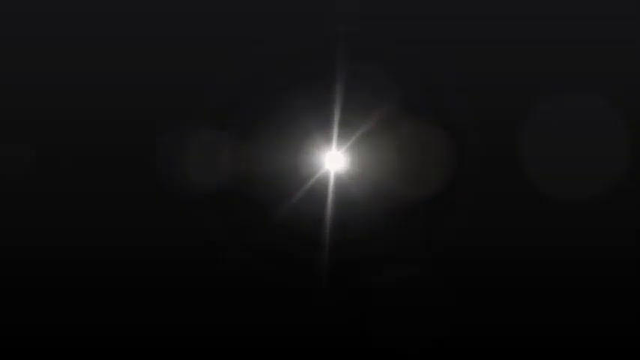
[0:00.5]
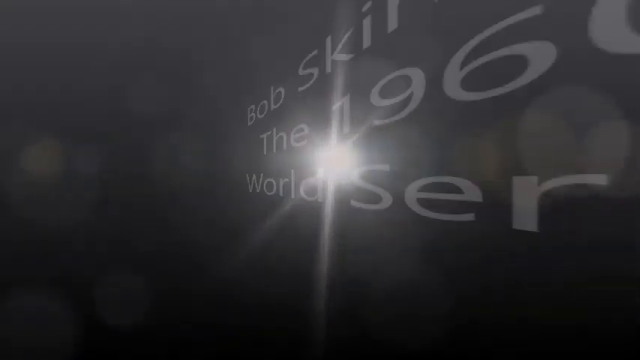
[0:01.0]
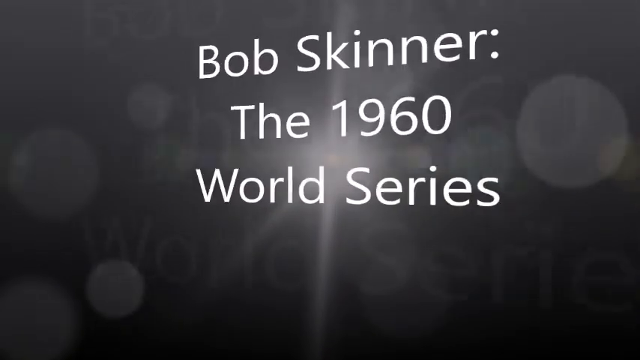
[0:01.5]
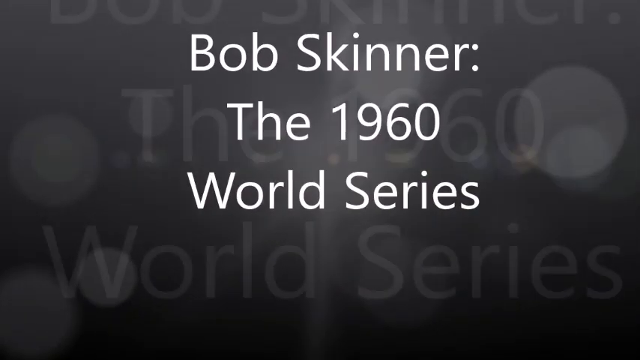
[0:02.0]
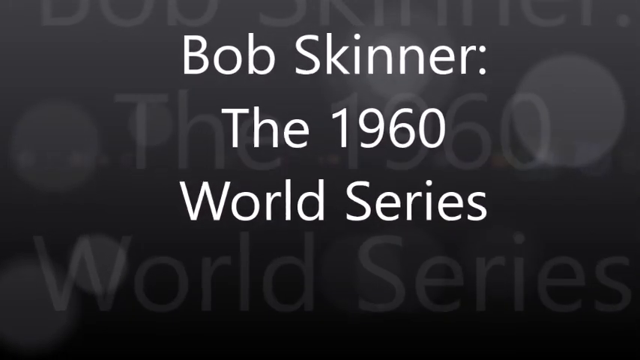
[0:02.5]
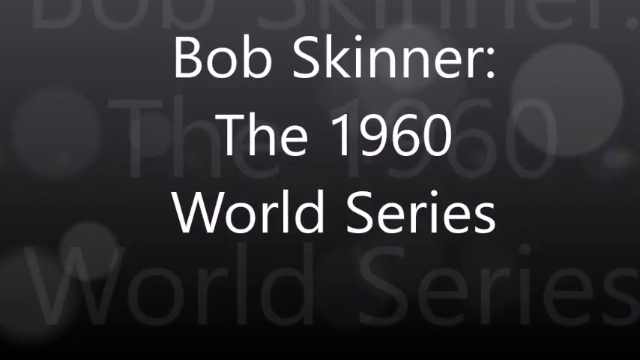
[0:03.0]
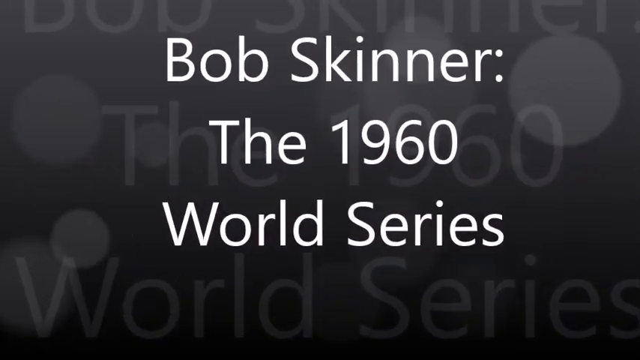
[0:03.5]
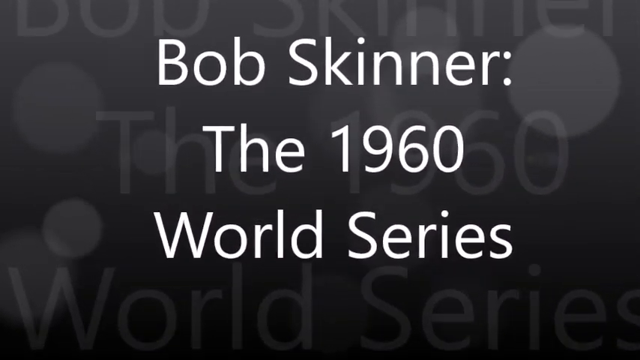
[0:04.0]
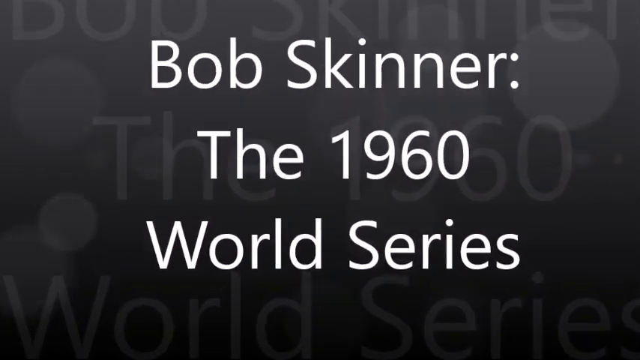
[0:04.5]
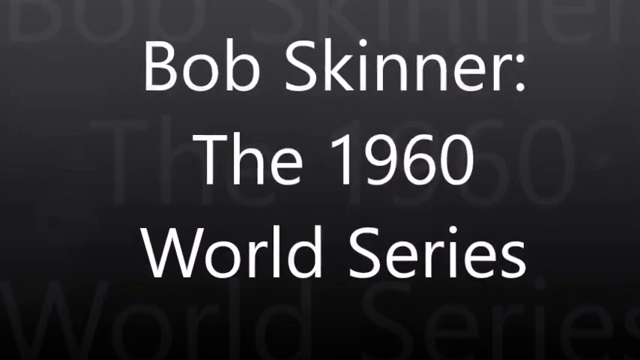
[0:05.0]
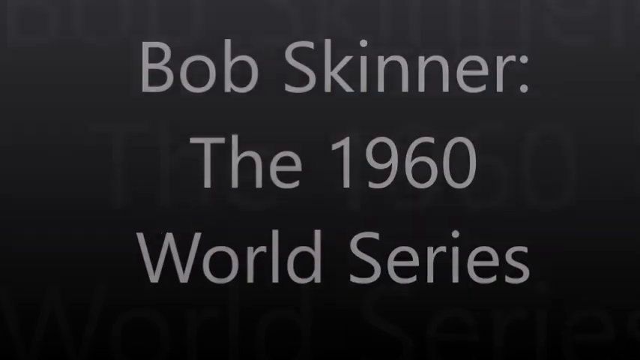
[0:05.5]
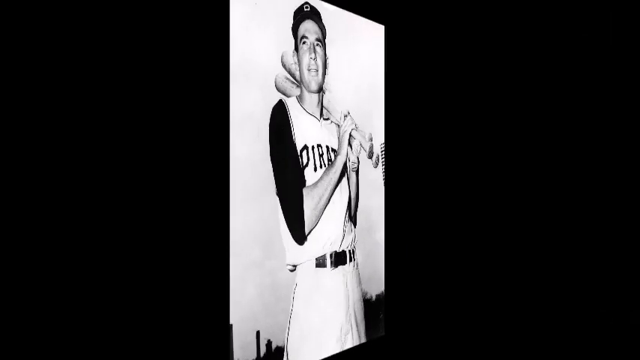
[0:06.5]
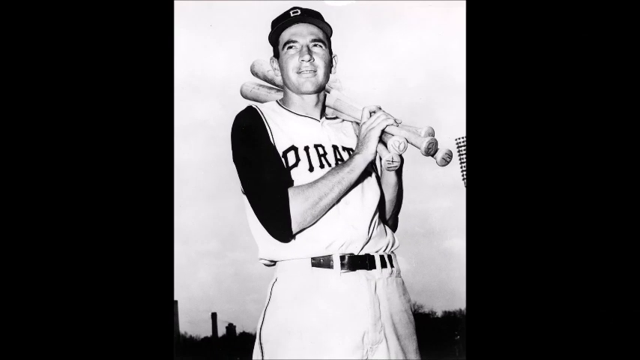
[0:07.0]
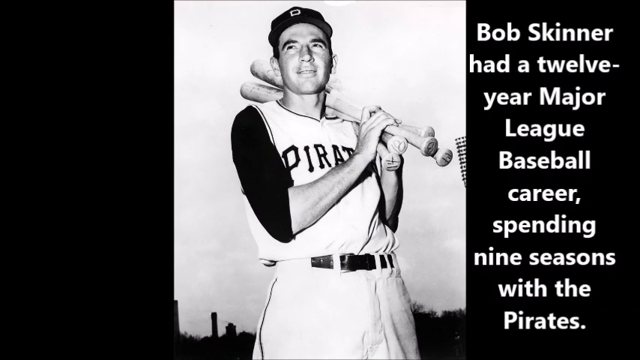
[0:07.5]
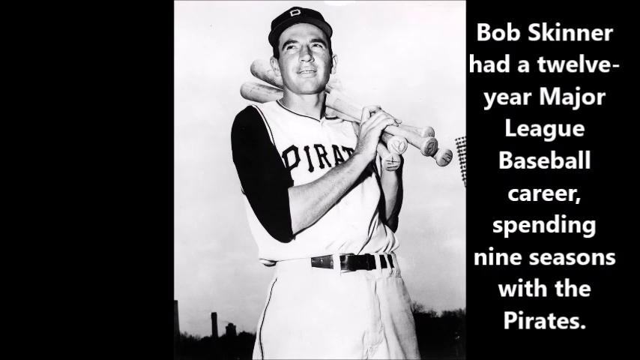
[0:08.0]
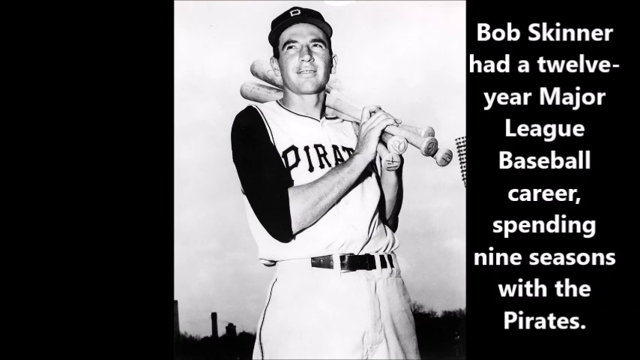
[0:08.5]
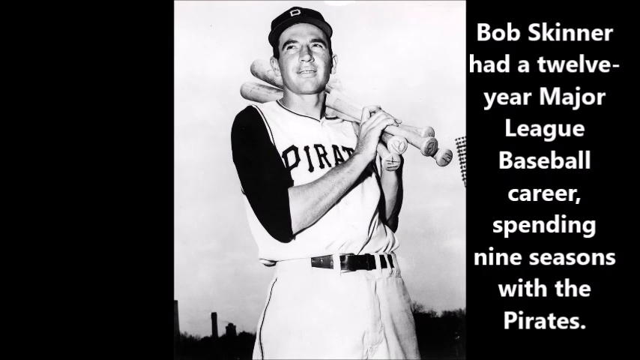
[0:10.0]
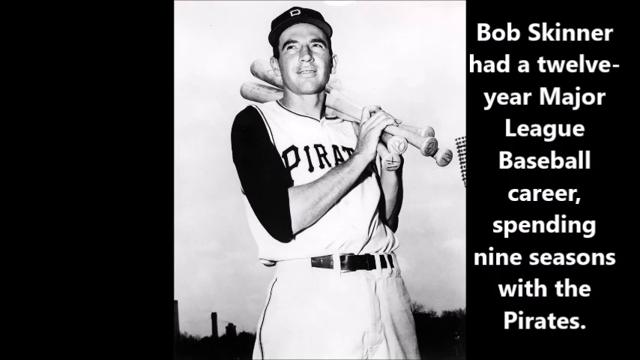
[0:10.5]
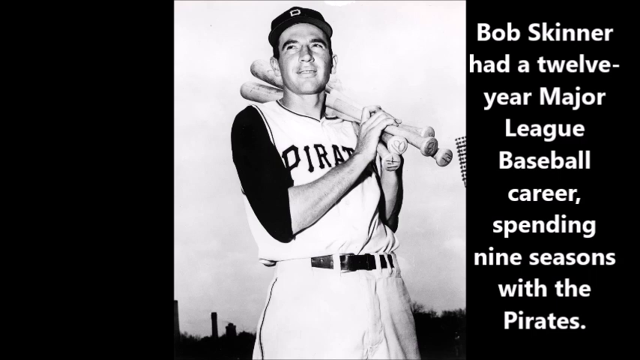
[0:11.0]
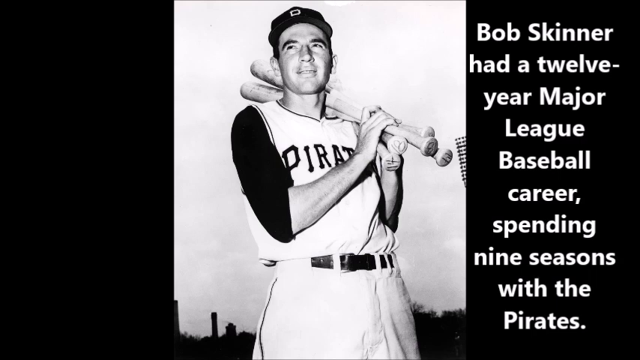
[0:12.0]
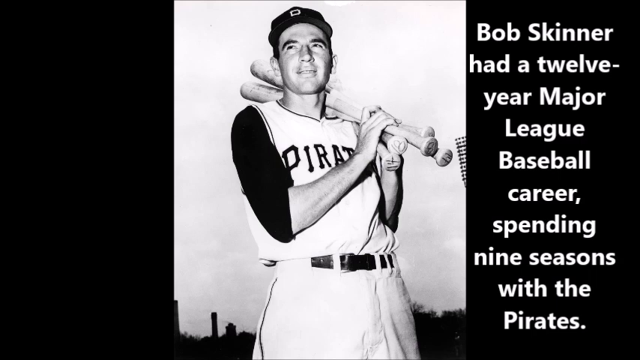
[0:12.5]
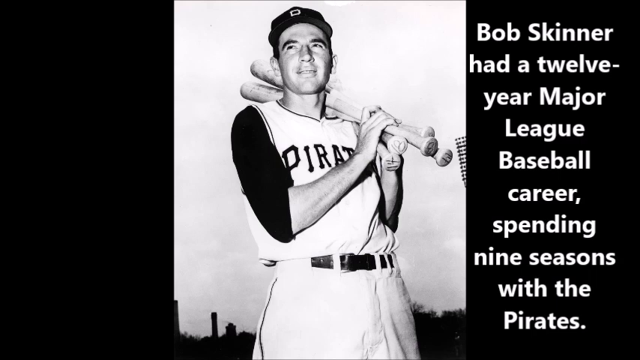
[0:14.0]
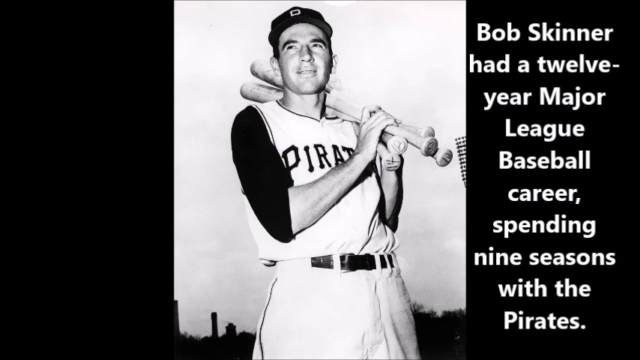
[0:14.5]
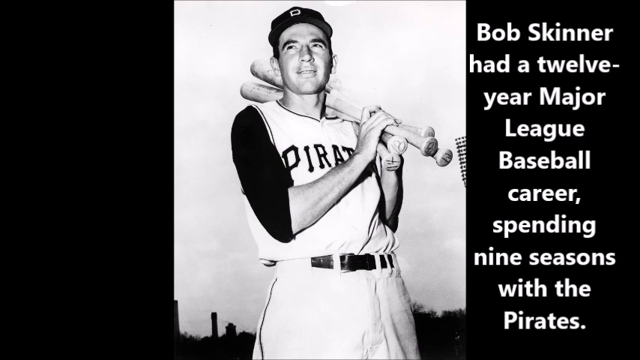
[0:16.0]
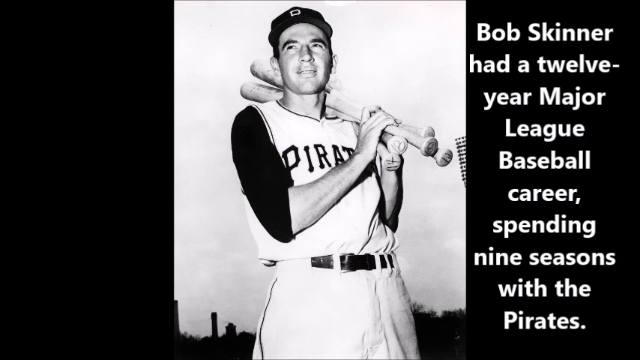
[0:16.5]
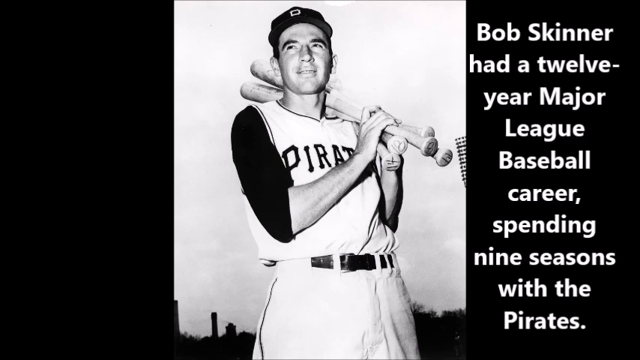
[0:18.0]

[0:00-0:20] The video opens on a black screen. A dot of glowing light appears in the centre and grows larger, lightening the screen to grey. Text moves in from the right, gradually fading in from nothing to become bright white text that rotates round to face straight at the camera. It reads 'Bob Skinner, the 1960 World Series'. The text continues to grow, moving towards the viewer, with a larger, very transparent echo of the text behind it. The screen fades to black, and a picture emerges in the centre. At first it is completely flat and invisible, seen side on; the picture, which is the height of the screen, then rotates round to fill the middle section of the screen. It is a black and white shot of a baseball player in an old-fashioned baseball outfit. He holds four bats over his left shoulder, gripping the ends of the bats with both hands. His trousers and the main part of his jersey are white, with black sleeves rolled up to the elbows. The writing on the front of his jersey appears to say 'Pirates'. He is looking up to the left, above the top of the shot, not at the camera. He wears a black baseball hat with what might be a P on it, and he is standing against the sky. On the black section of screen to the right of the image, white text appears: 'Bob Skinner had a 12-year Major League Baseball career, spending nine seasons with the Pirates'.